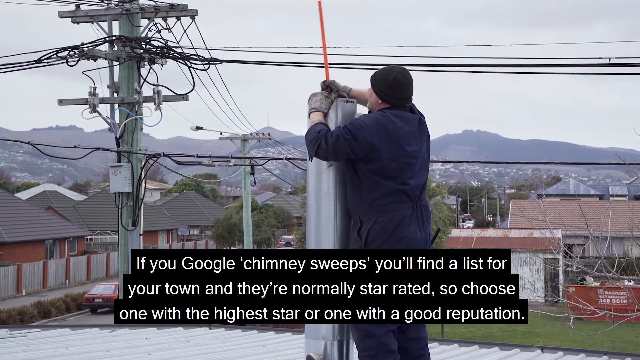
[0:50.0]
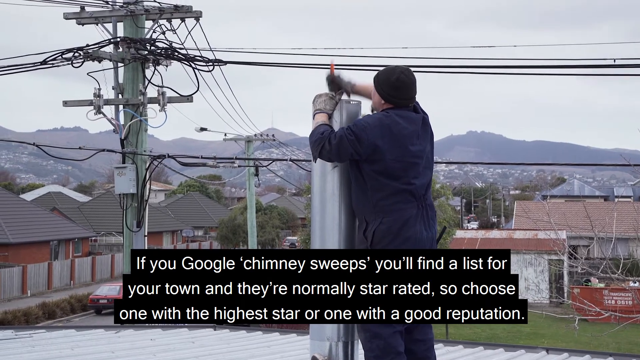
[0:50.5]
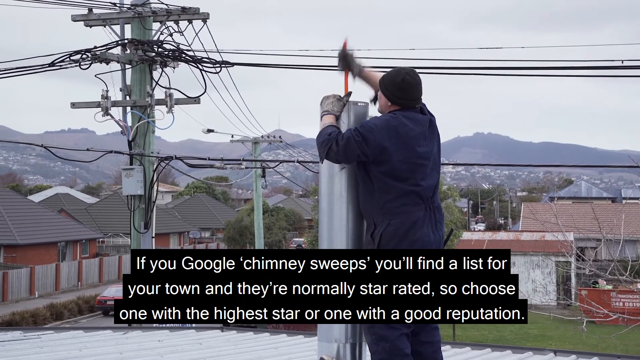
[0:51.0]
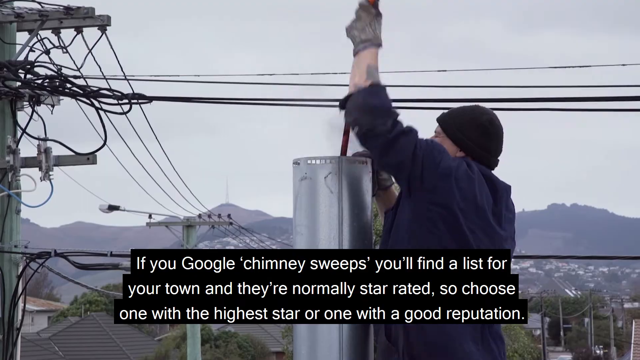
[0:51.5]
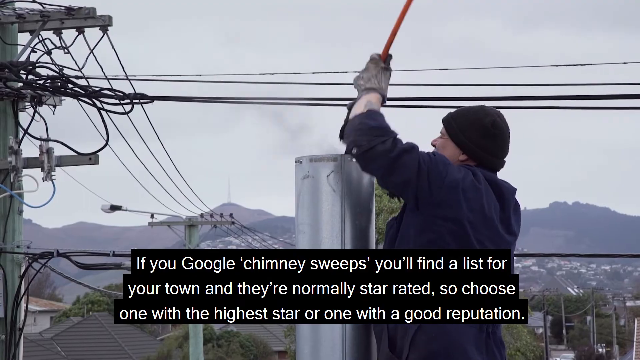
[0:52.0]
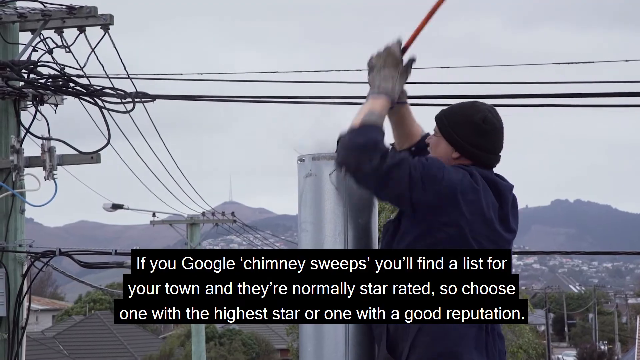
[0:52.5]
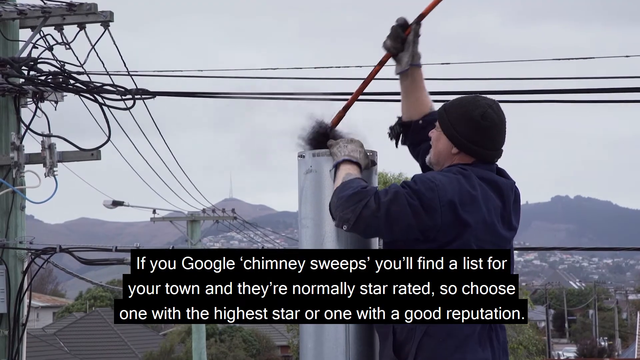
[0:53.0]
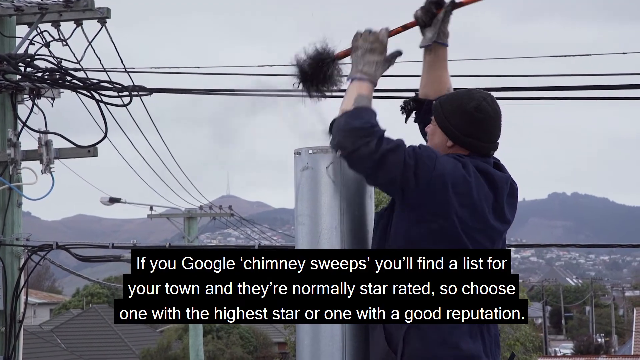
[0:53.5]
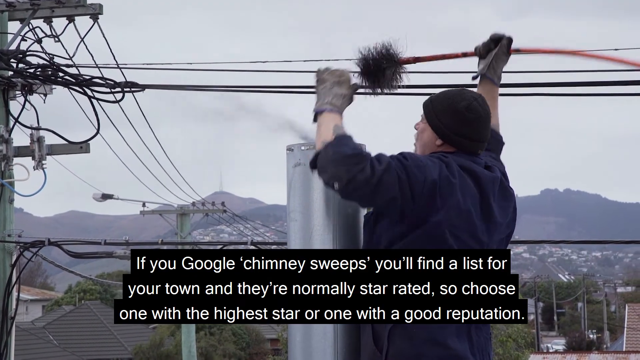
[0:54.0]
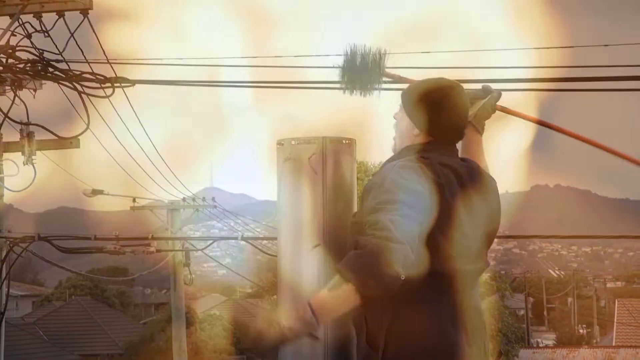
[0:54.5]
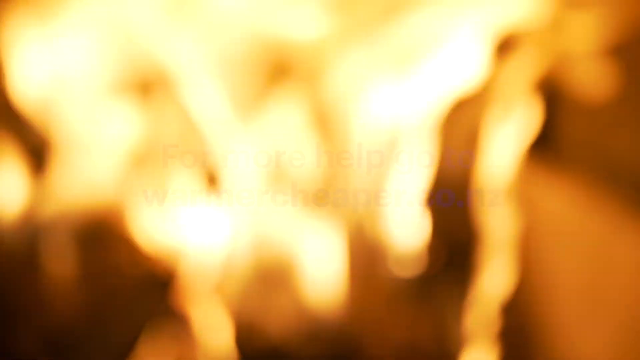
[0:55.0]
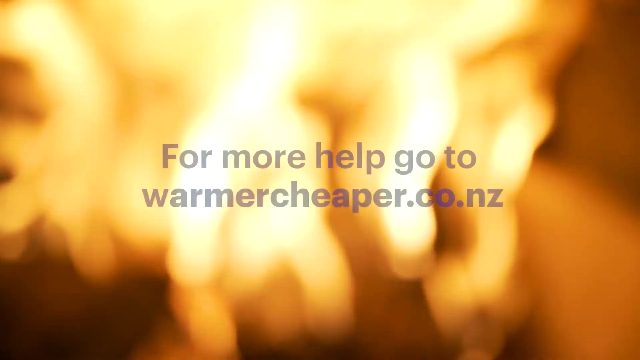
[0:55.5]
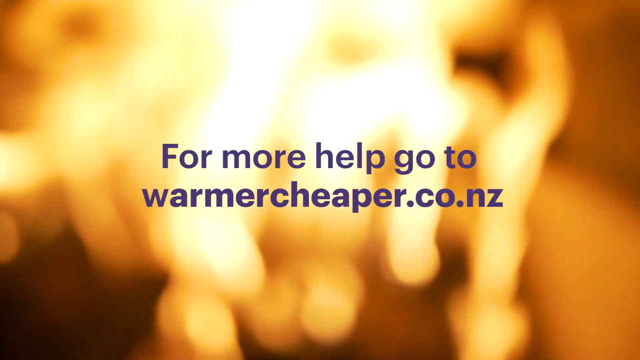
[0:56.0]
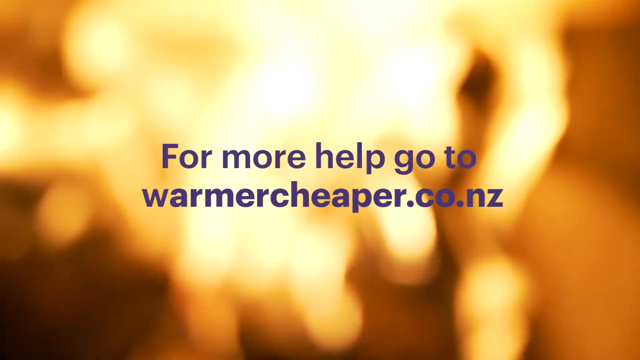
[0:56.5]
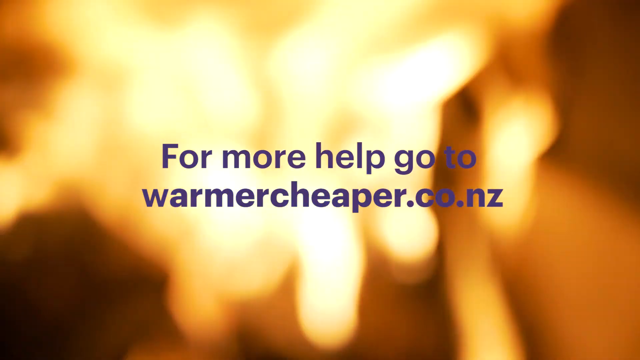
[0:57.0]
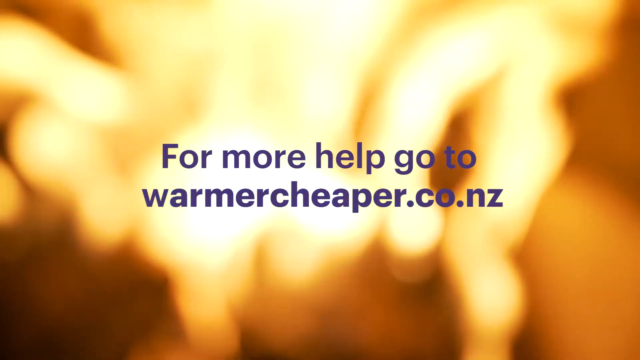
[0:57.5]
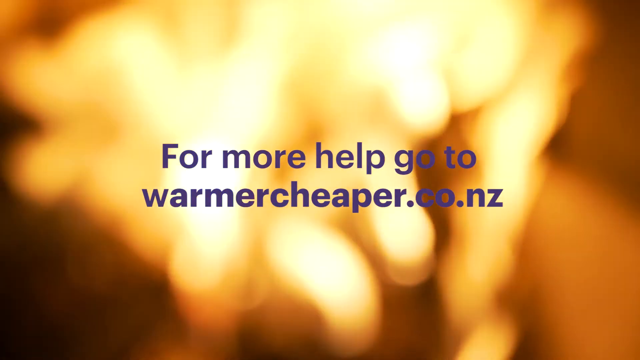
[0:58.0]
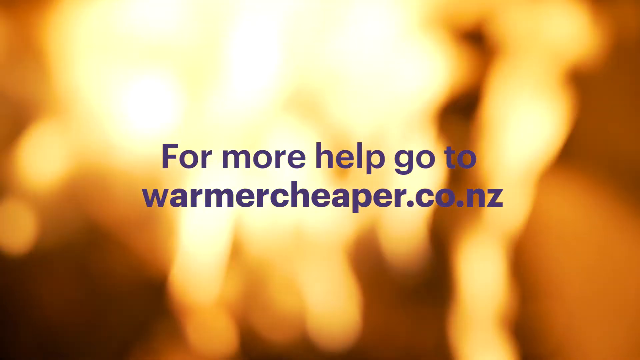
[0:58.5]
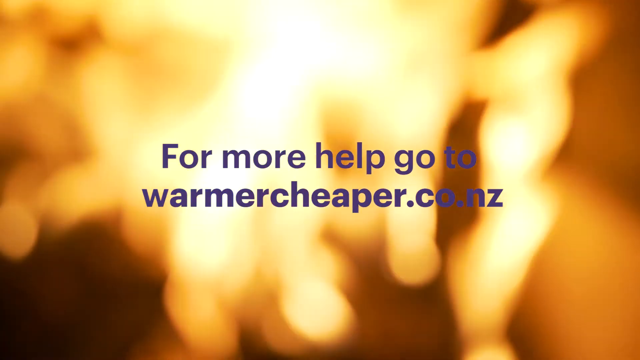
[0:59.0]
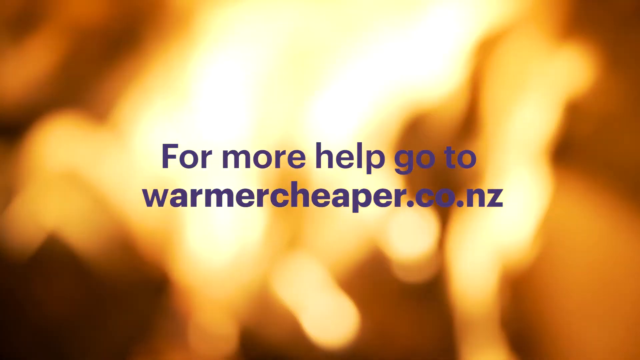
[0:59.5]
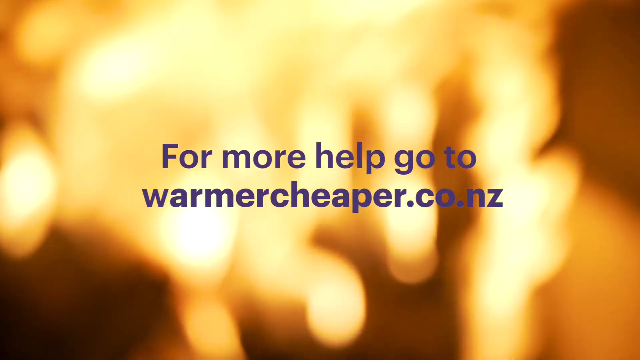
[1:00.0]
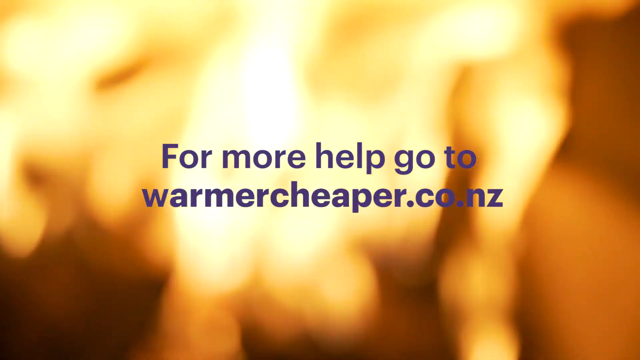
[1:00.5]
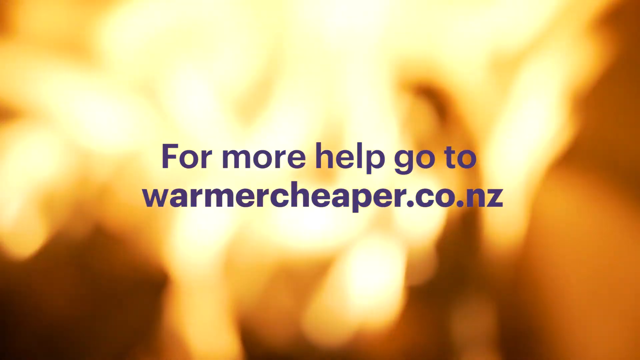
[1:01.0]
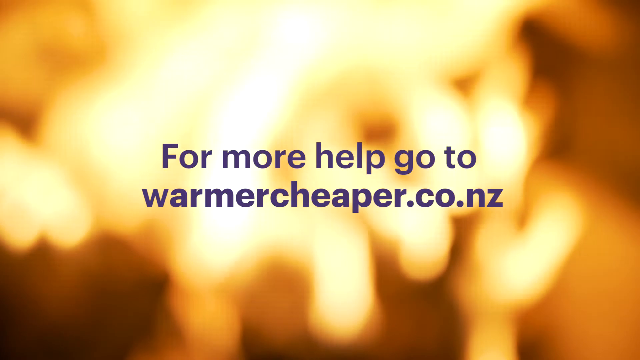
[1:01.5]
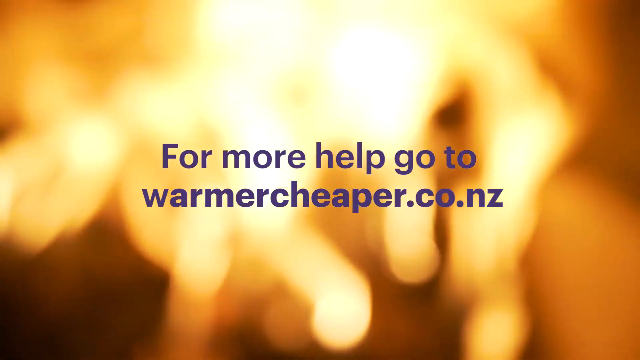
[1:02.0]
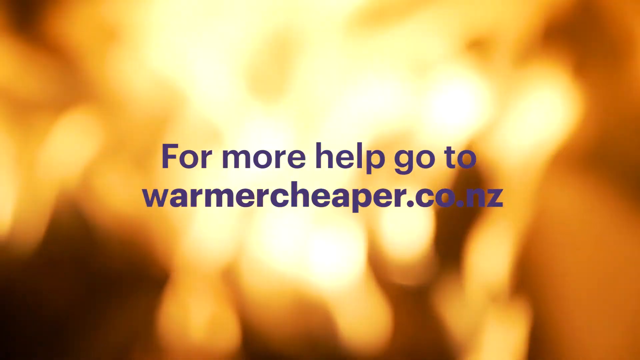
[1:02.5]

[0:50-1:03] Against the same background, the same man keeps pumping the chimney sweep up and down, trying to get really deep. Dark smoke pops out every time he pumps into the chimney, which looks silver. He then lifts the chimney sweep out once he is done, and some black dust, possibly ash, comes out. It looks like it is probably the winter season; it is very cloudy, there is no sun, and no other people are visible. Then apparently the same fire from the beginning is shown with purple text on screen: "for more help go to warmercheaper.co.nz". The fire keeps burning in the background from then on.